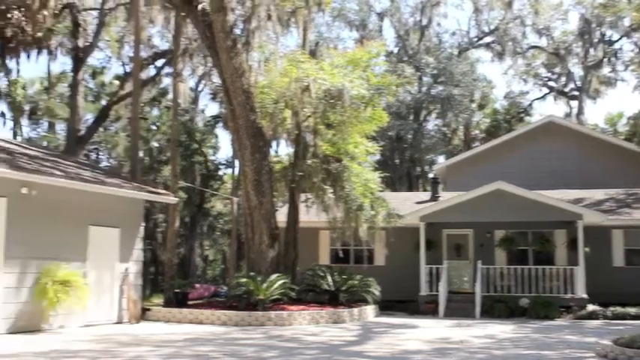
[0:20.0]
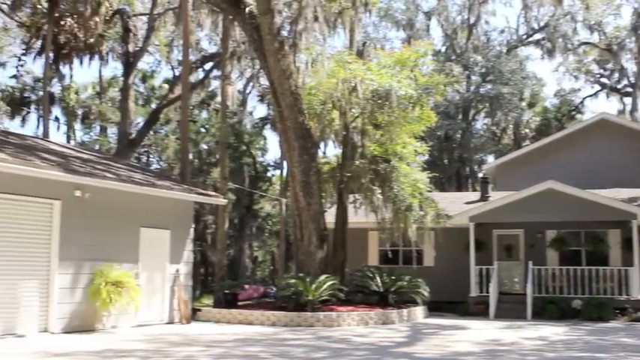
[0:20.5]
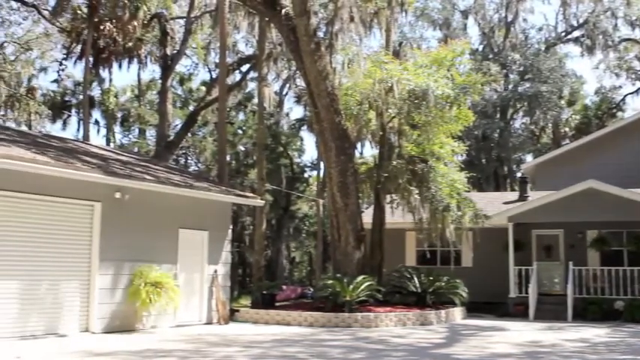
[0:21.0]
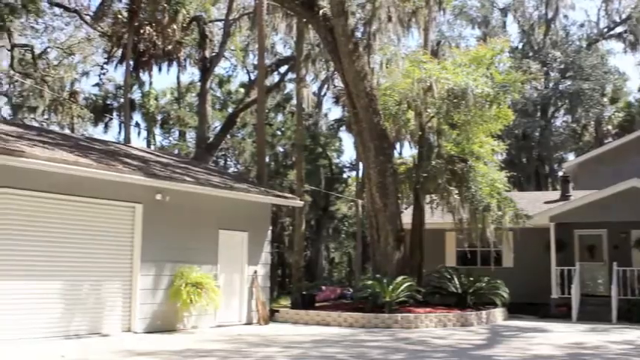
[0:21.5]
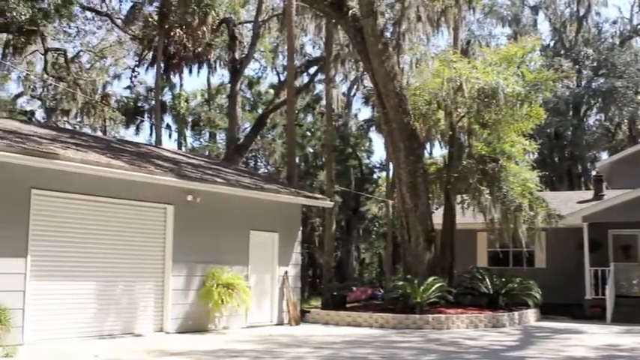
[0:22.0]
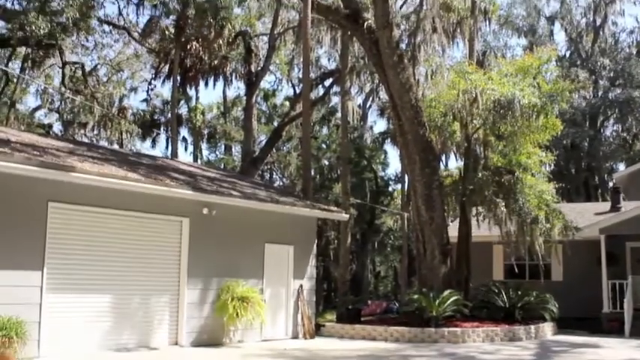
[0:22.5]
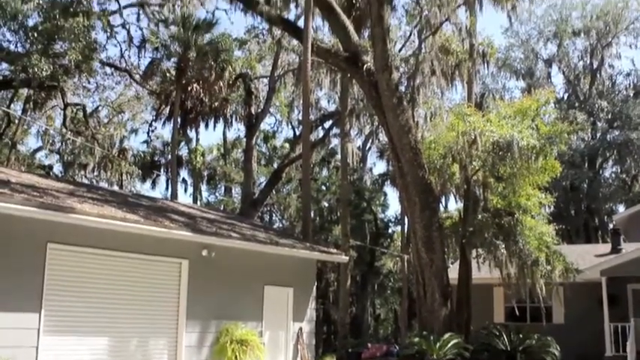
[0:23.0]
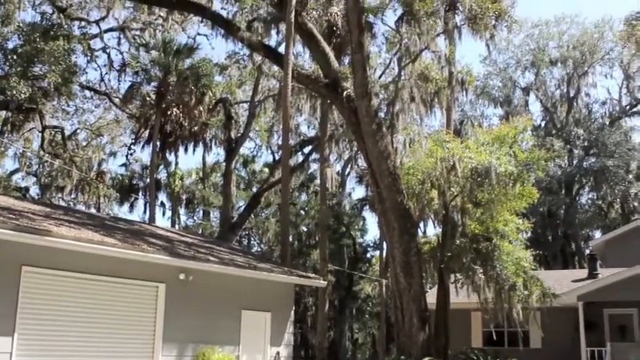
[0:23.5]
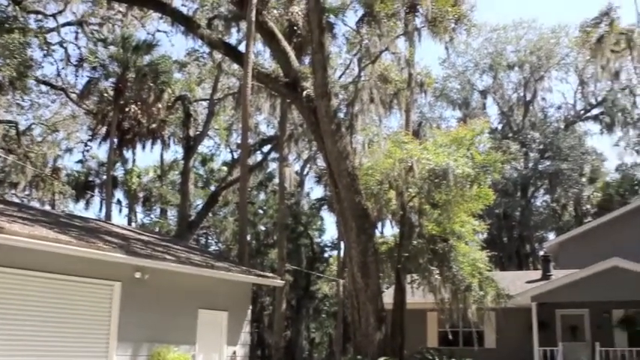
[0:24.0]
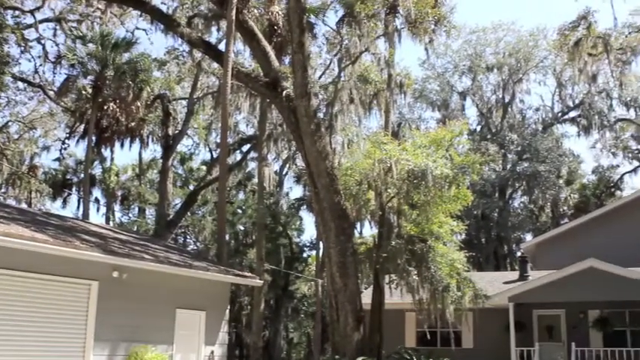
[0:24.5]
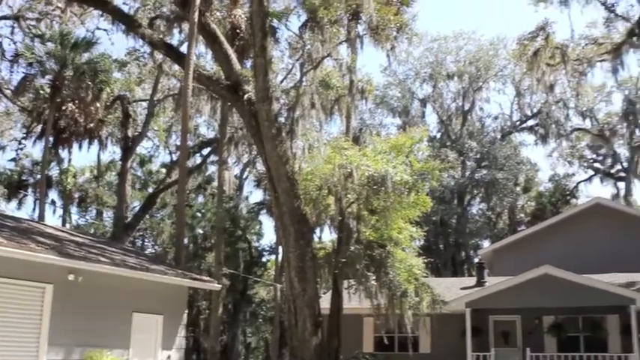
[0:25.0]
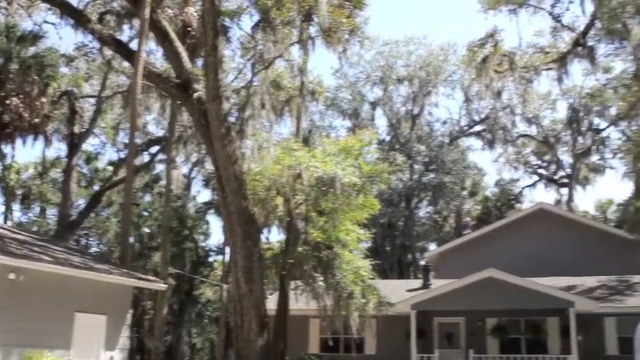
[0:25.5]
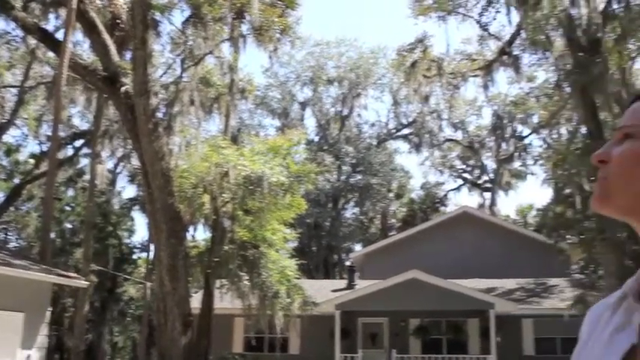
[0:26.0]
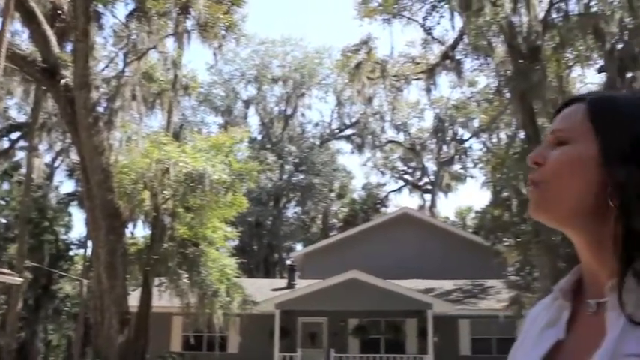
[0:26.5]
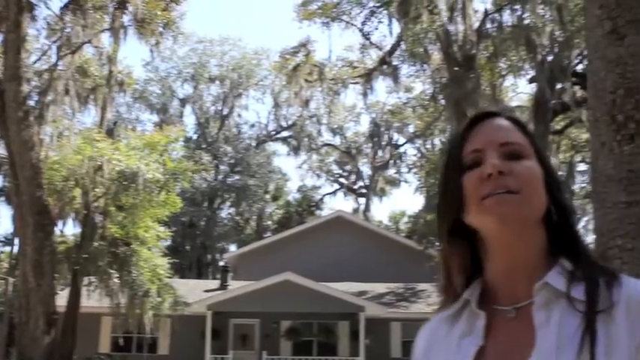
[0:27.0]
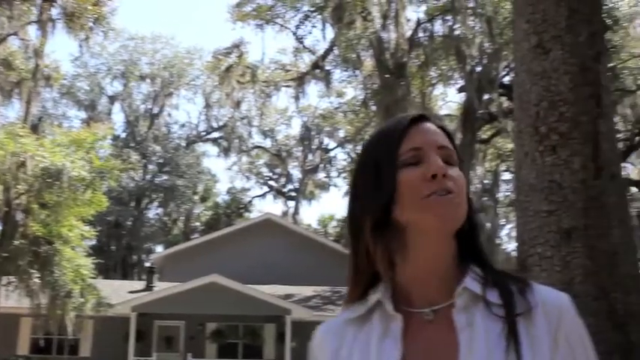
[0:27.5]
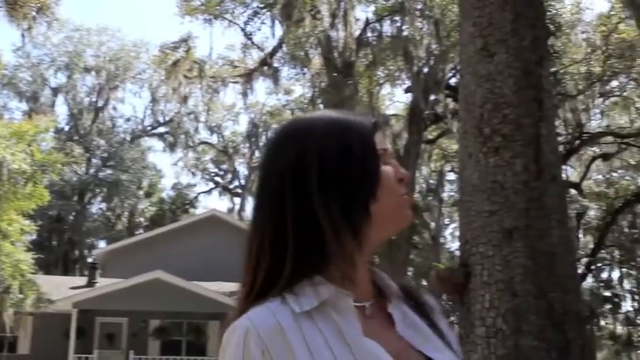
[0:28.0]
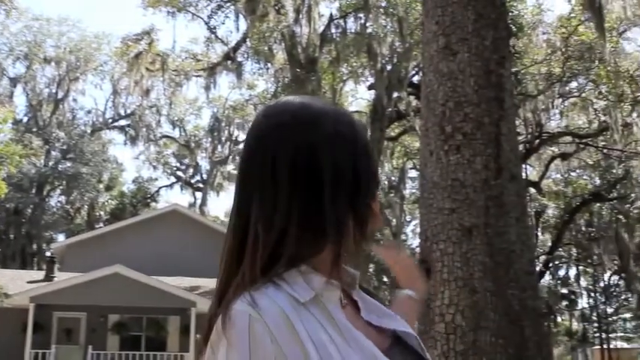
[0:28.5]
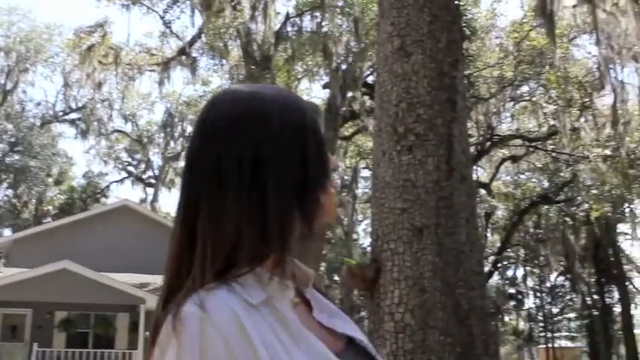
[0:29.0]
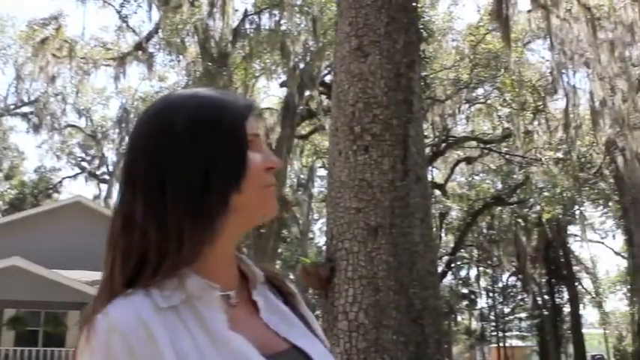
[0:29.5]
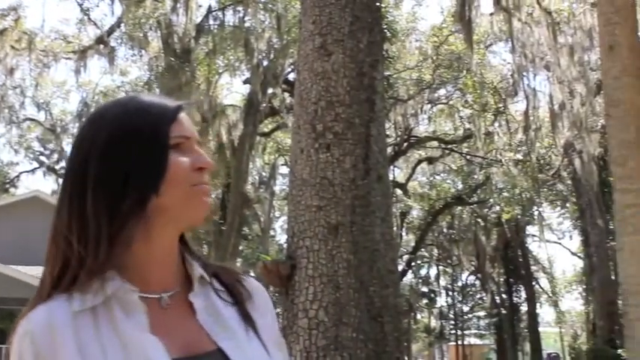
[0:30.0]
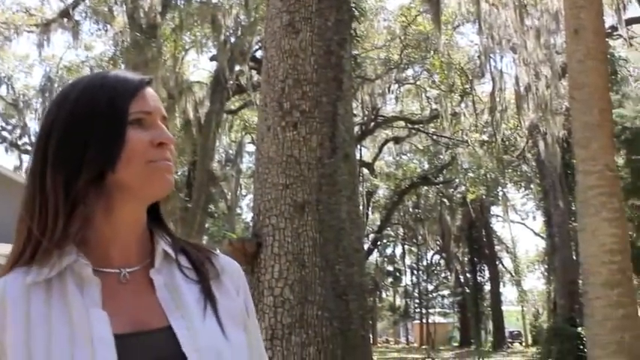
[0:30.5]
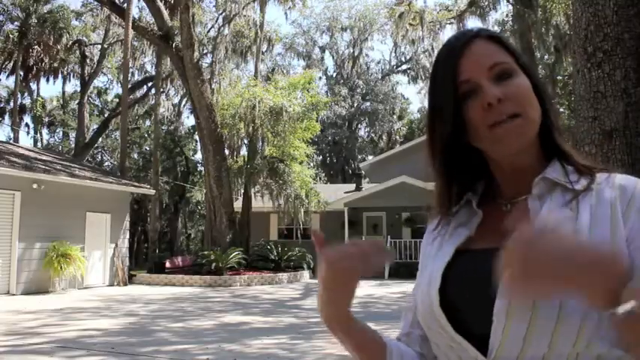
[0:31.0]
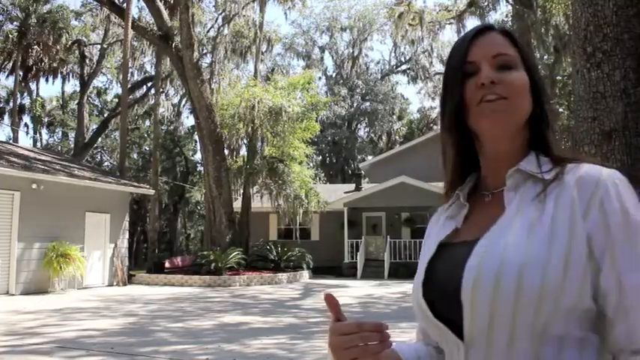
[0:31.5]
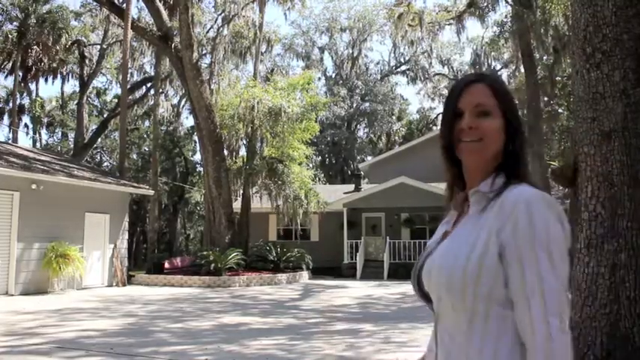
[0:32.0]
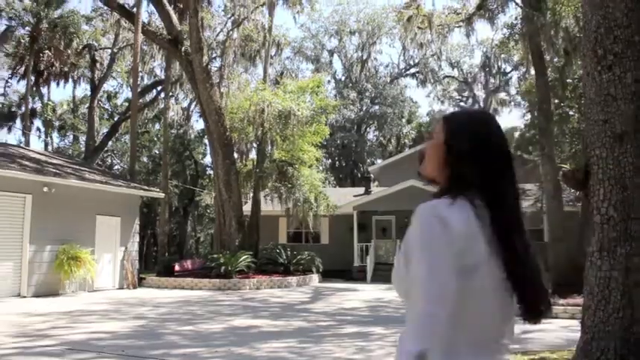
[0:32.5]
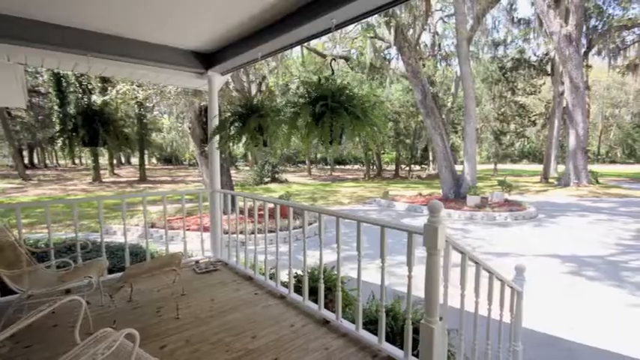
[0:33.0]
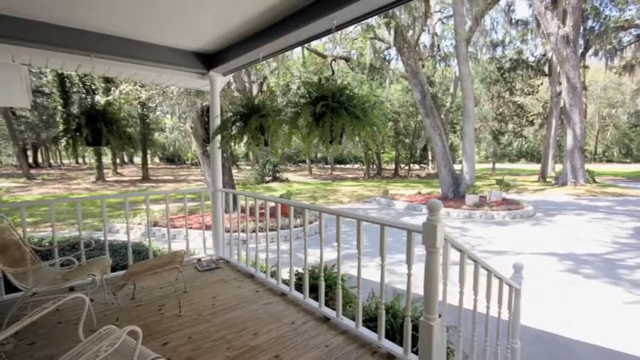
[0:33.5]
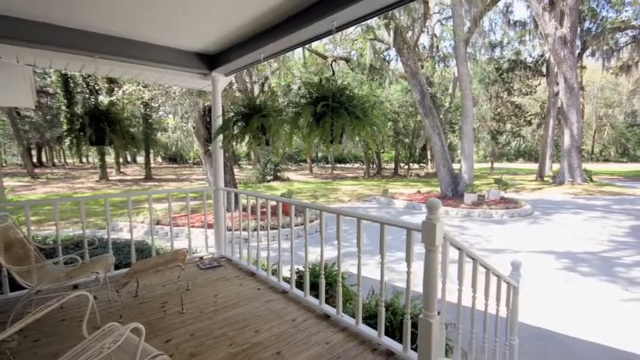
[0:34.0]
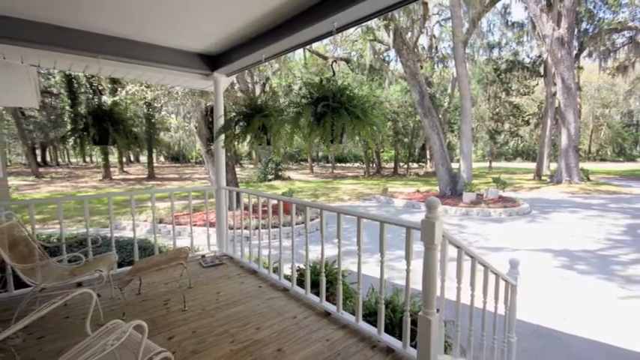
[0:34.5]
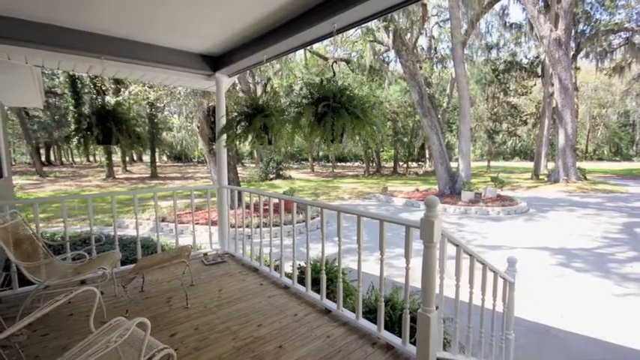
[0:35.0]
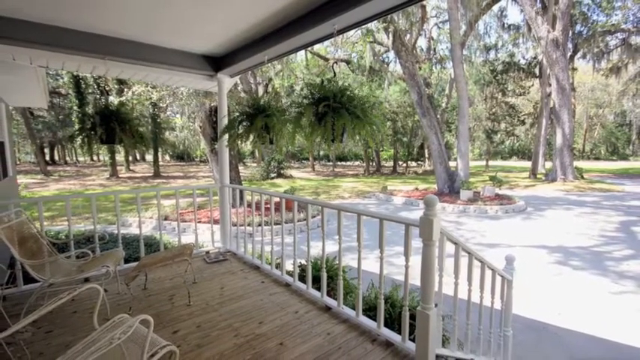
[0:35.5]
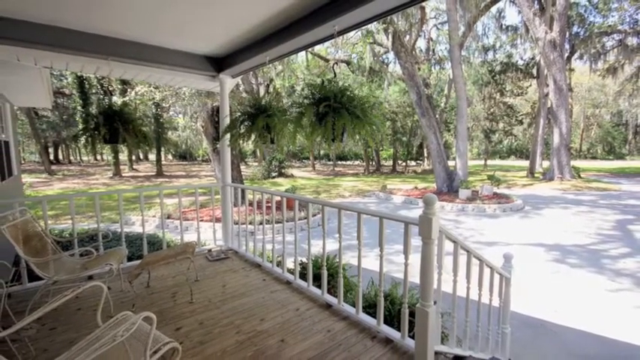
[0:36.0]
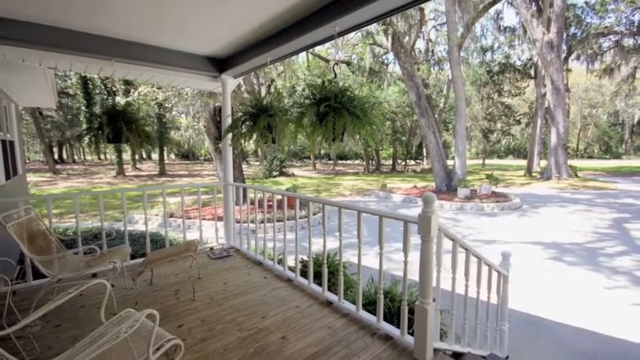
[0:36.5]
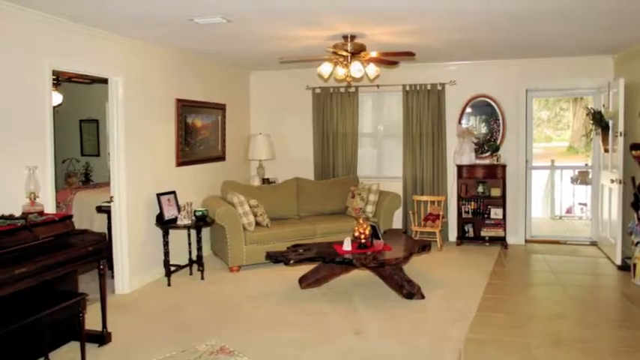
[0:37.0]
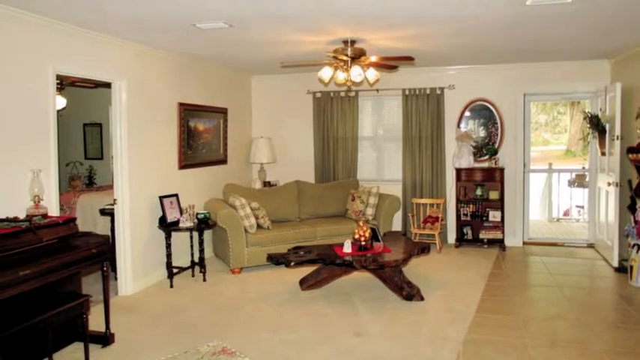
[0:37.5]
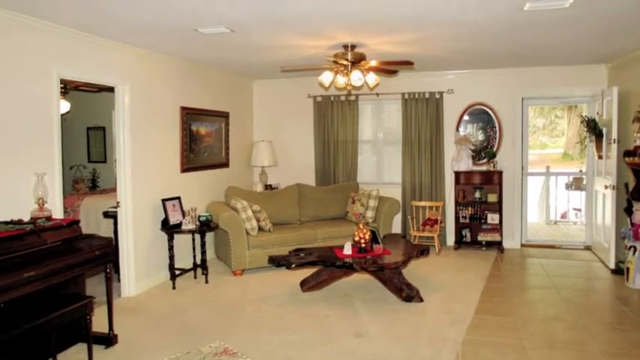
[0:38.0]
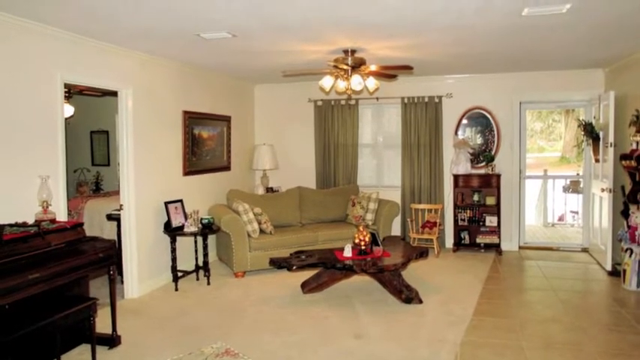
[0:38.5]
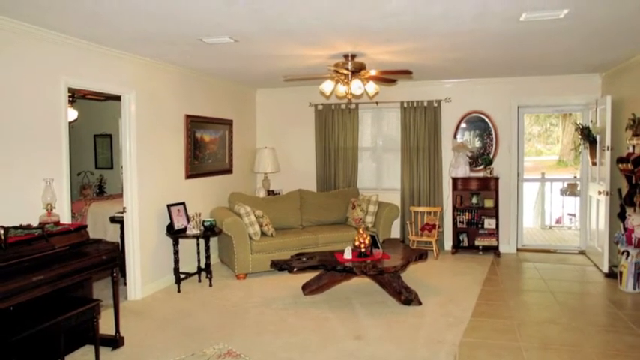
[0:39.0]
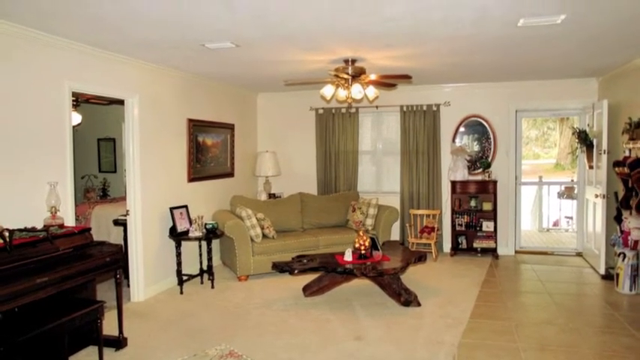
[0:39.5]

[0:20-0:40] The camera pans around to the left, showing the garage doors and the pedestrian door of the garage building, then angles slightly upwards to the canopy of well-established trees around the premises. It continues moving around to the right, past a close-up of the real estate agent. After a cut, she is again in front of the property, and she turns round and heads towards the premises. The camera angle changes to the front porch, with the camera moving backwards slightly to look over the front railing and out into the grounds, which have ornamental palms in landscaped grounds alongside the established older trees. The front porch seating area is also visible. The view then moves to a camera angle on one side of a lounge.